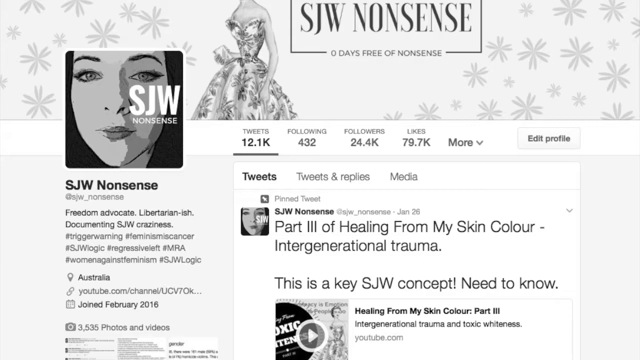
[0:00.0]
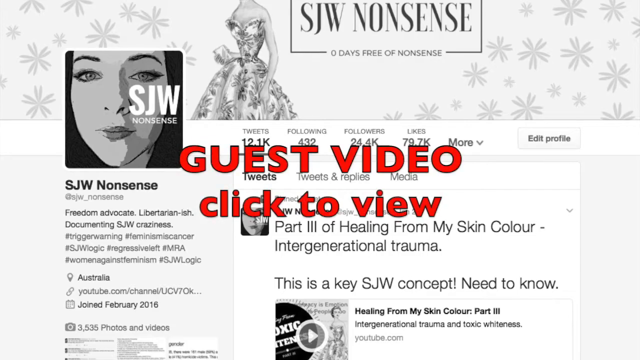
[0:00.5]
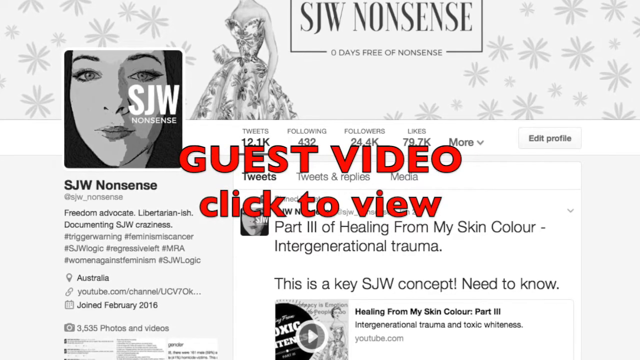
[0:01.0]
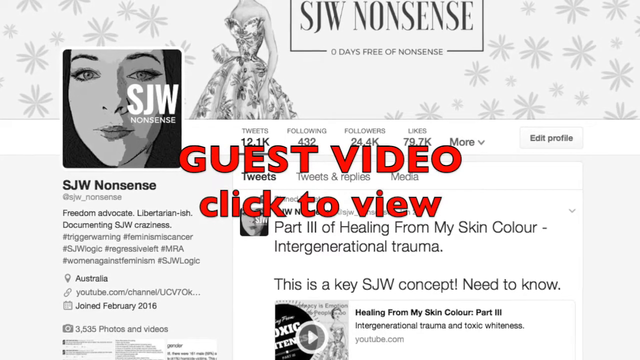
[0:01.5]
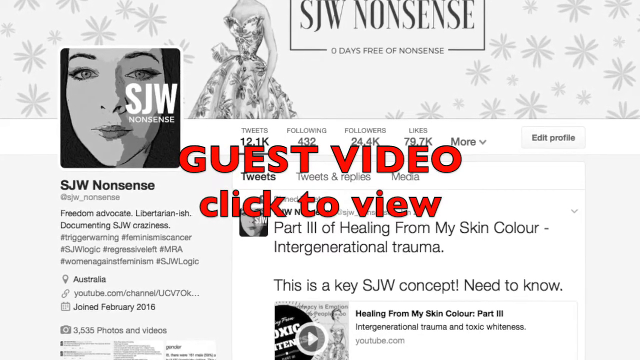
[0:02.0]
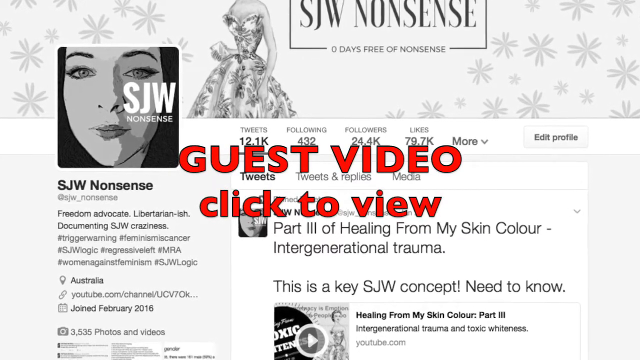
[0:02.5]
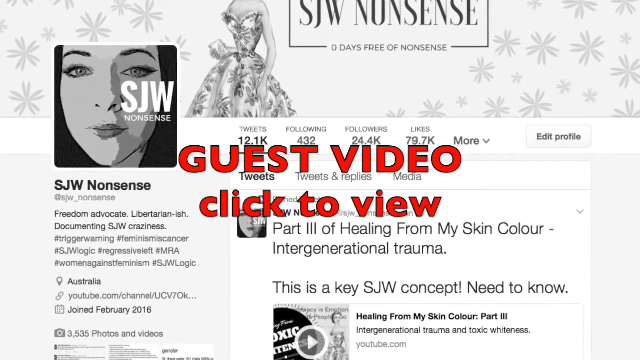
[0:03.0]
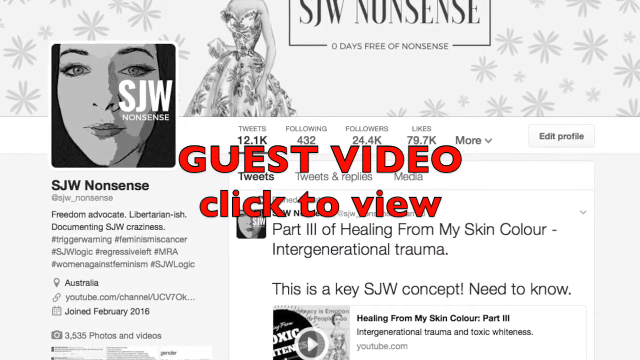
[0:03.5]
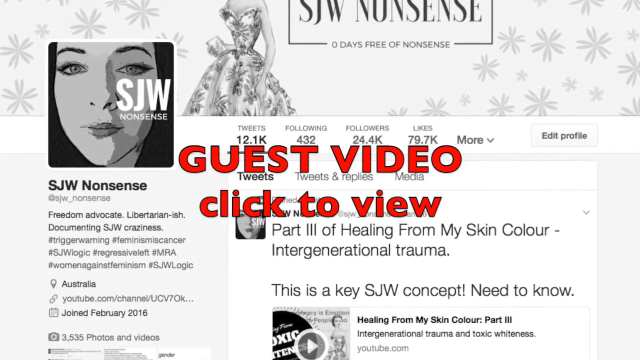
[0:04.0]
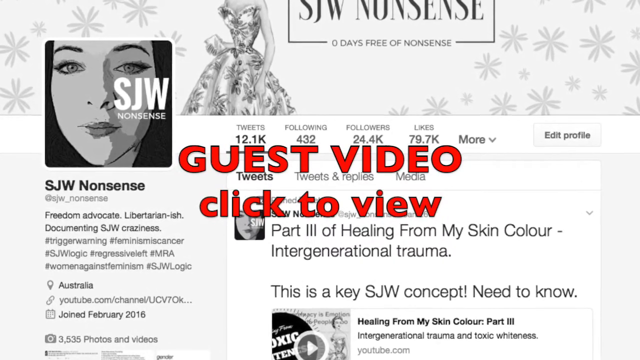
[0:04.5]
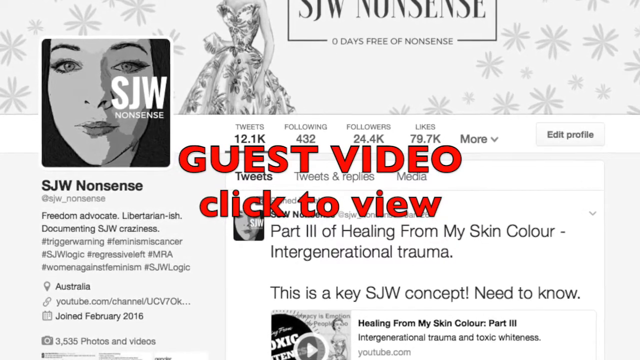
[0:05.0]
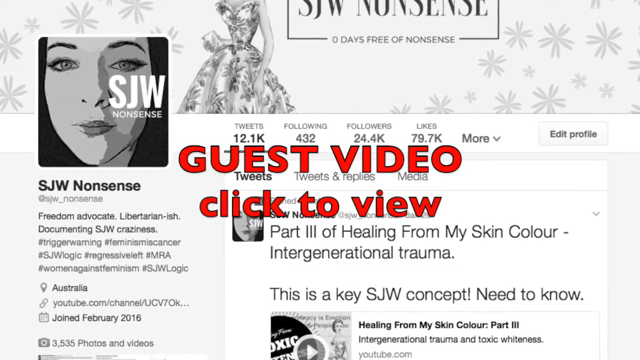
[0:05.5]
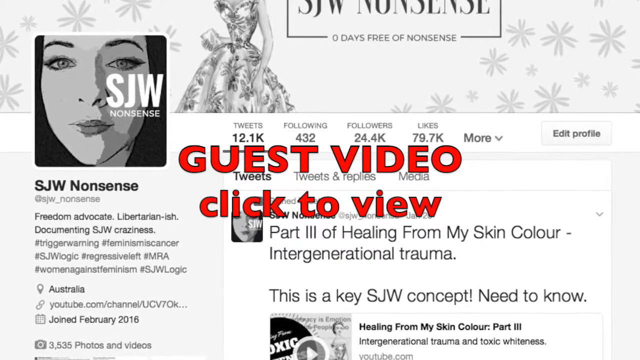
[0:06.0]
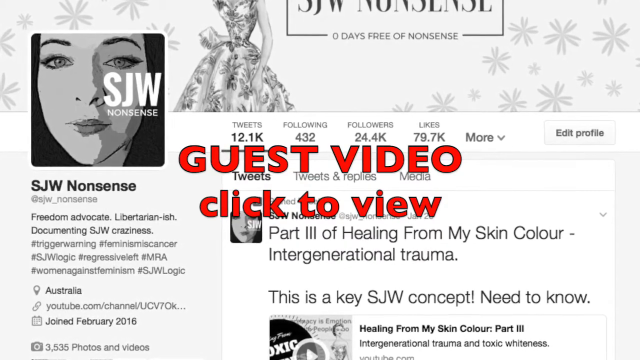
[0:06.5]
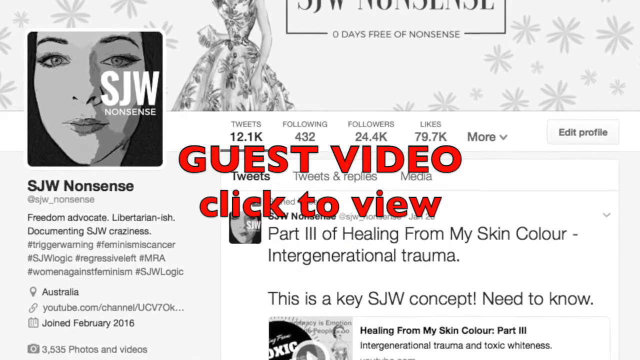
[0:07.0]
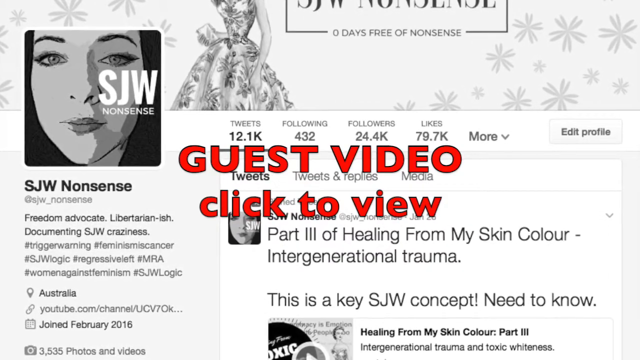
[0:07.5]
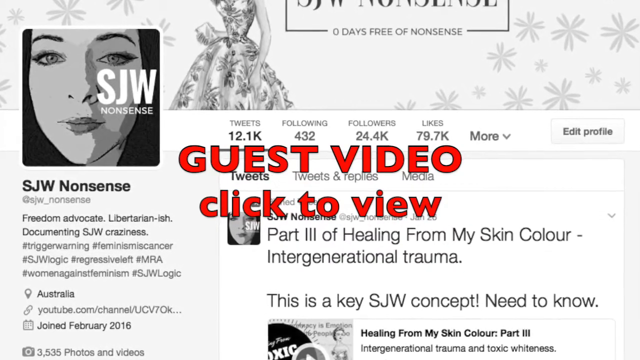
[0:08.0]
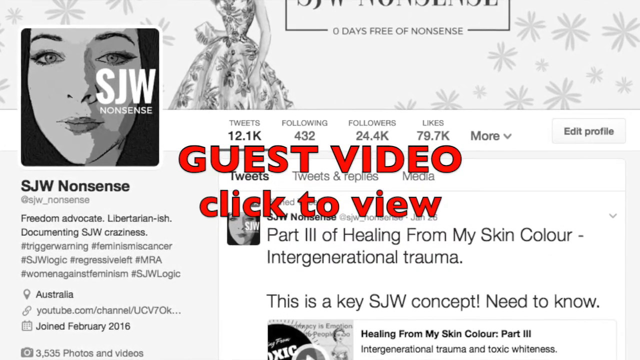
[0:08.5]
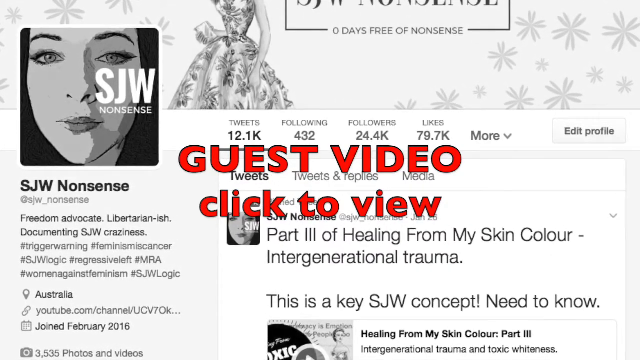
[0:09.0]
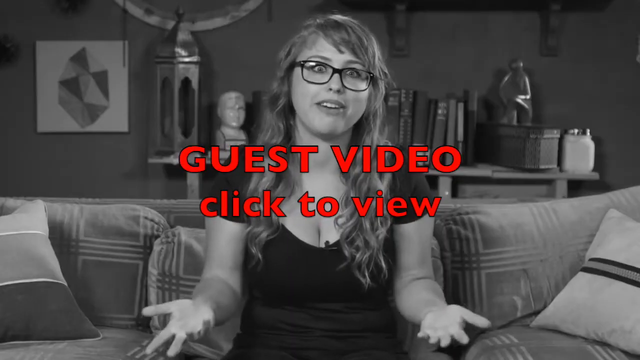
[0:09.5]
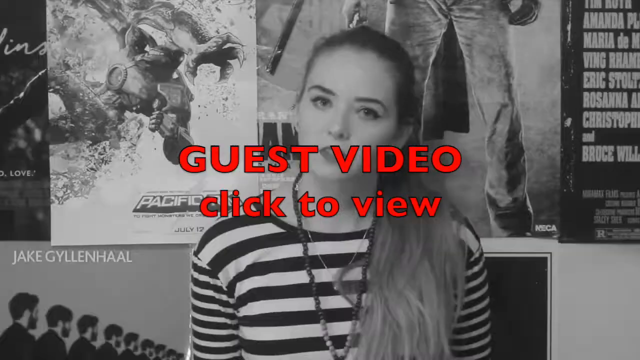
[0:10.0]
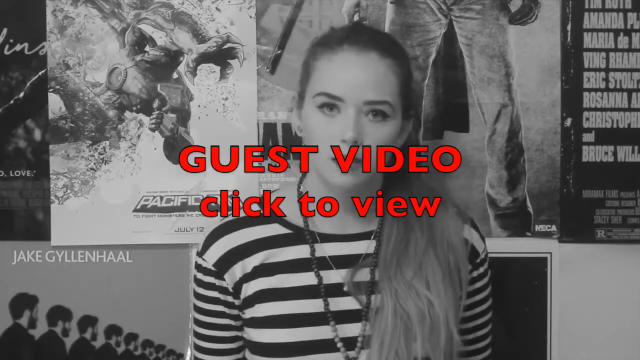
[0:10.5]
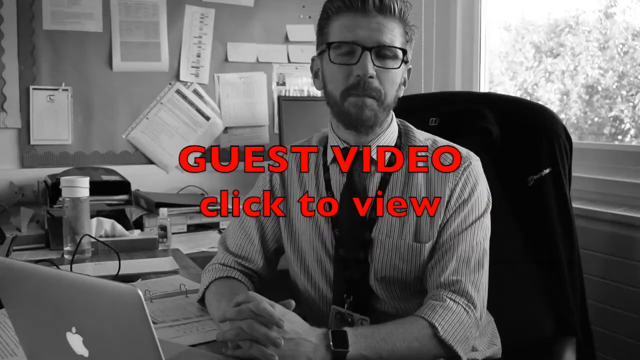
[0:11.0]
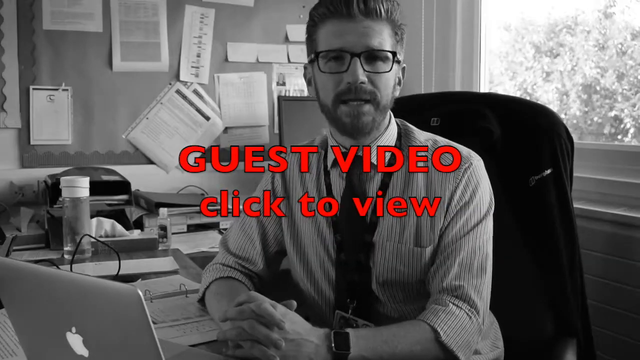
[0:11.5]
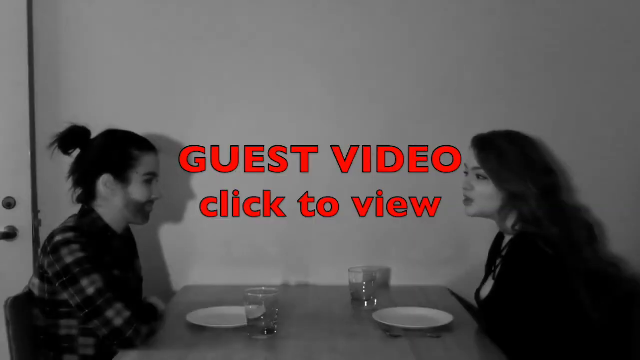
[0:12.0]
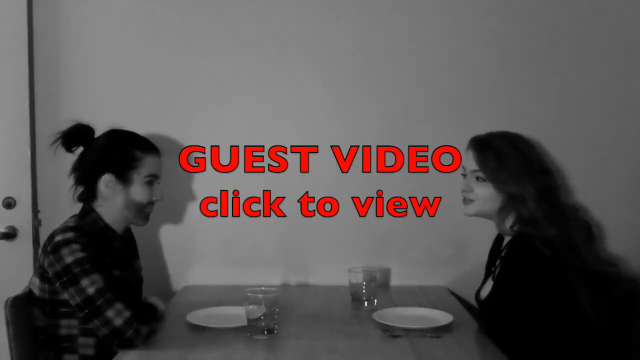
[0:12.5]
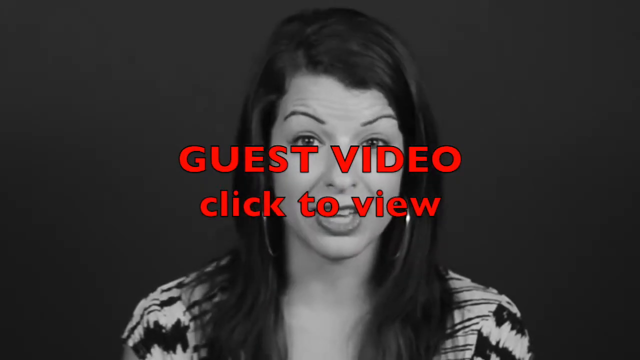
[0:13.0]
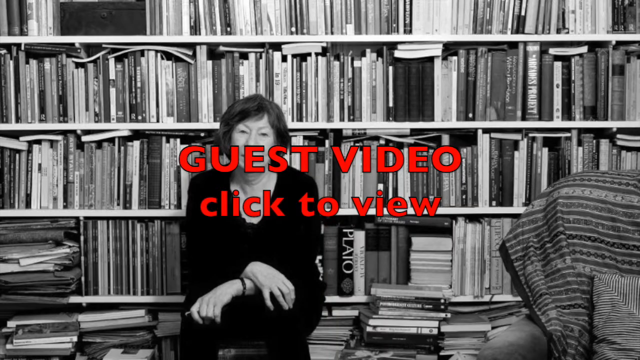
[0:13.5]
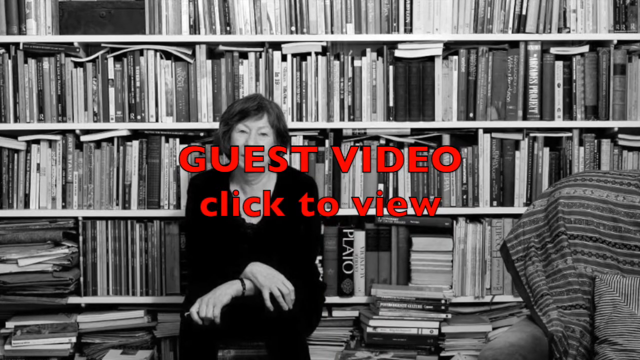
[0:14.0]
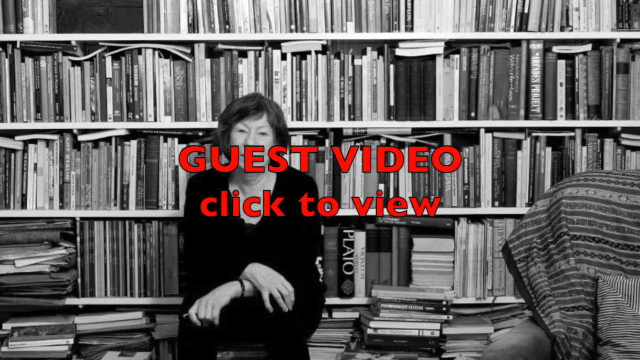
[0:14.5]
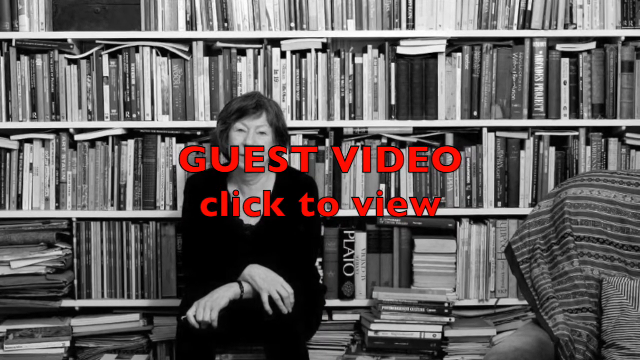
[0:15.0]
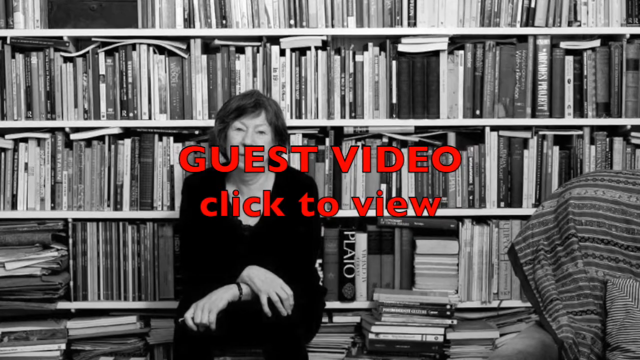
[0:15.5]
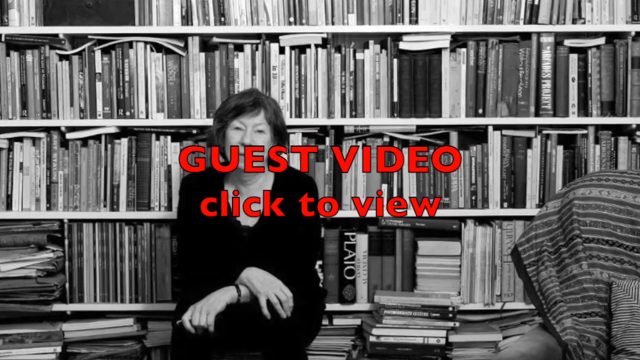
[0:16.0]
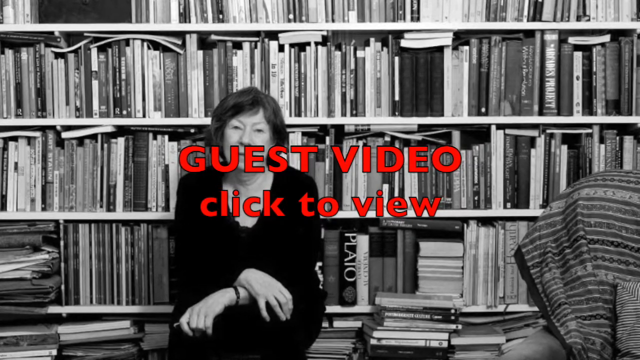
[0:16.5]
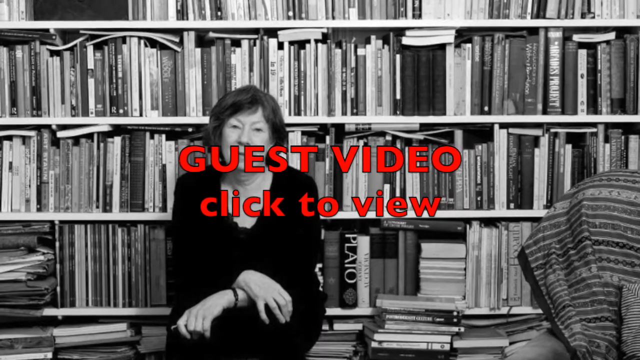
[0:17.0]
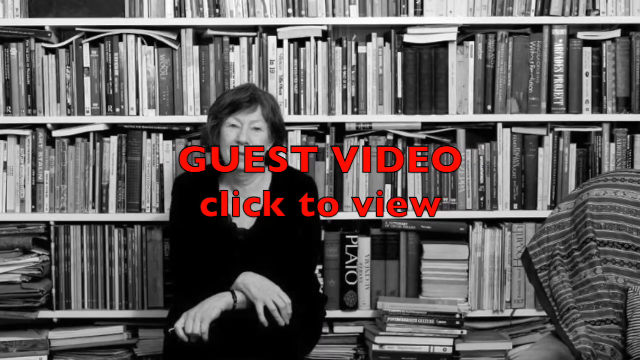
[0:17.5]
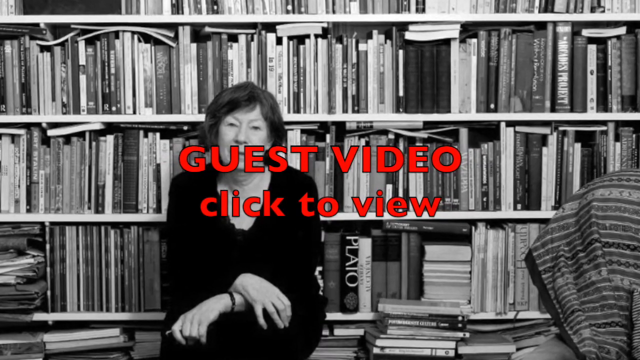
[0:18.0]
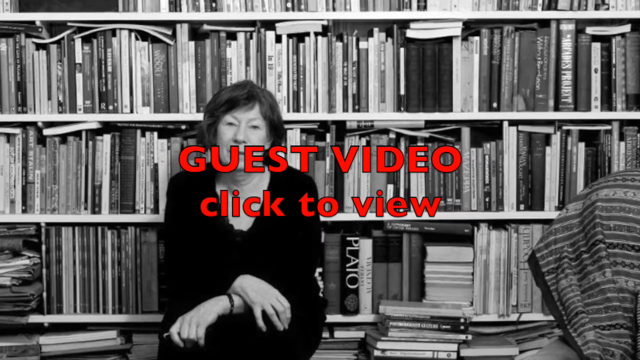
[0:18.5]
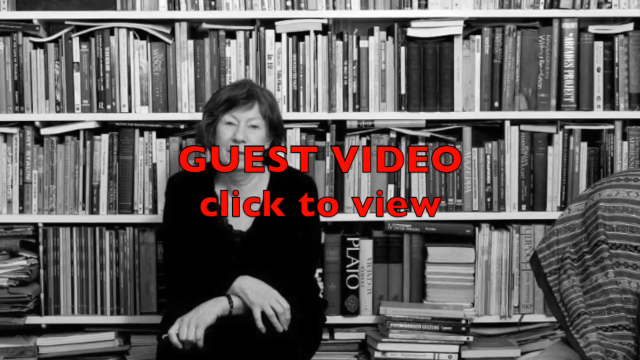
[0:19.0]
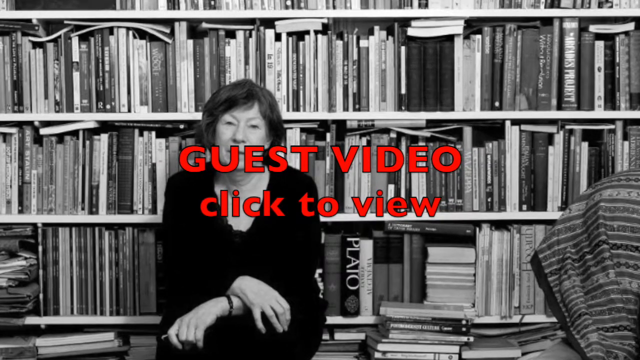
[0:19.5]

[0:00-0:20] A web page appears, with red text at the beginning that reads "a guest video click to view." In the background is a social media website that appears to be Twitter: it is the front page of someone's Twitter, the page is called SJW nonsense, and the word "tweets" is in the middle. The scene changes to a woman sitting down on a couch, talking. The scene changes again to another woman, who appears to be standing and wears a black and white striped long-sleeve top, talking; the whole scene is in black and white. Next a man sits at a desk, speaking, and the scene is still black and white. The people who are talking look directly at the viewer. The scene changes quickly to two people talking while sitting at a table, then to another woman who is talking. Another woman talks in some sort of library setting; she sits upon a desk, with a lot of books on shelves in the background behind her. Then a more close-up view shows this same woman, who is old, with a white wall behind her.